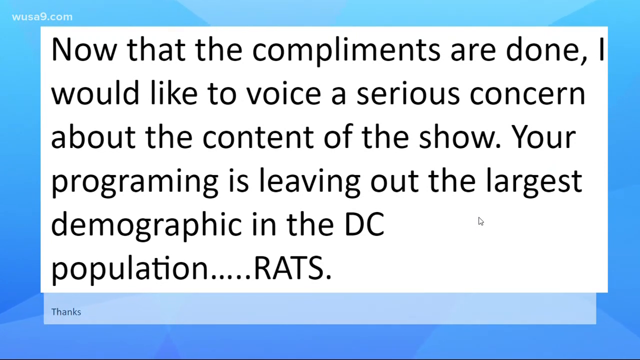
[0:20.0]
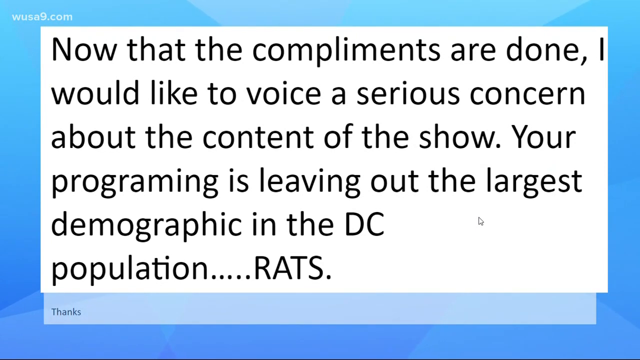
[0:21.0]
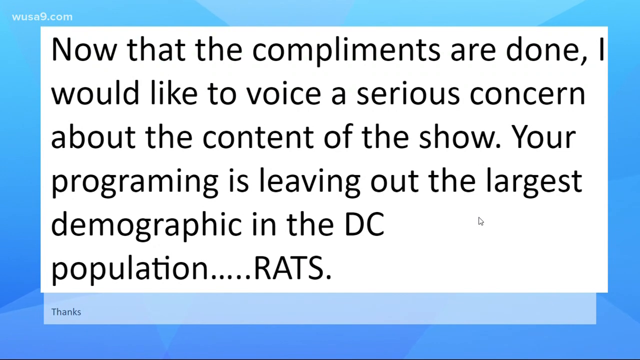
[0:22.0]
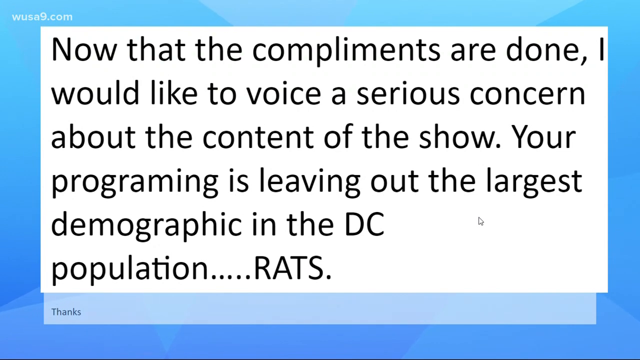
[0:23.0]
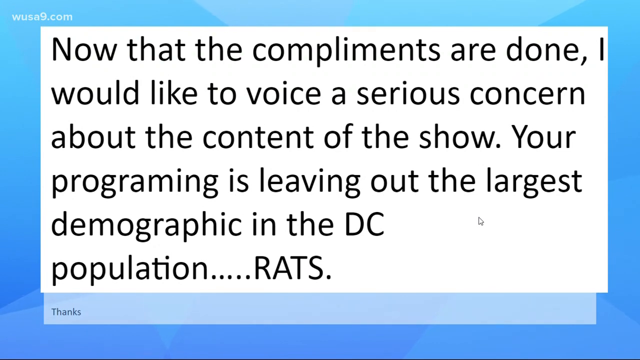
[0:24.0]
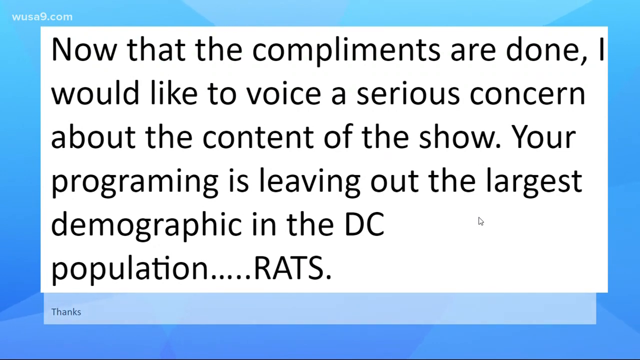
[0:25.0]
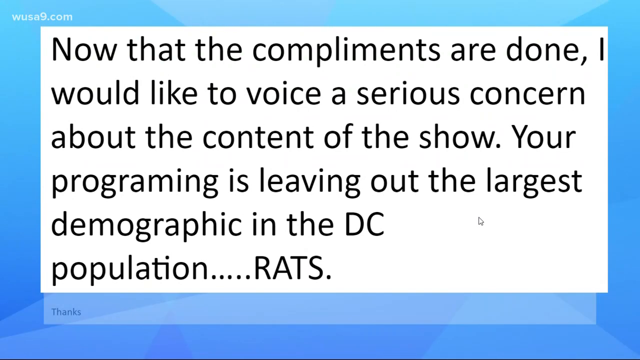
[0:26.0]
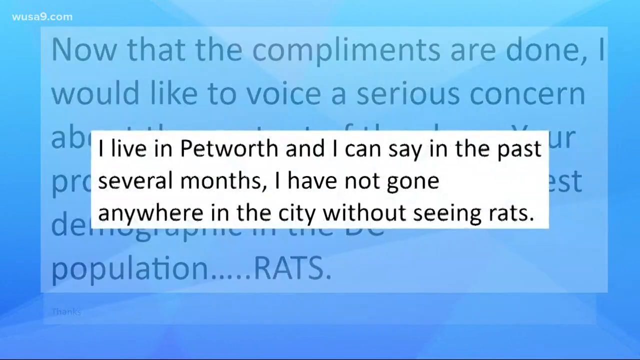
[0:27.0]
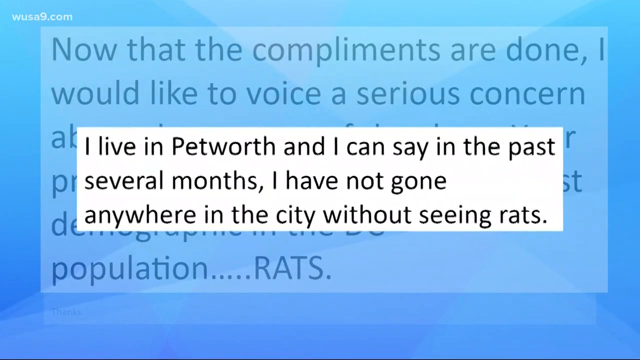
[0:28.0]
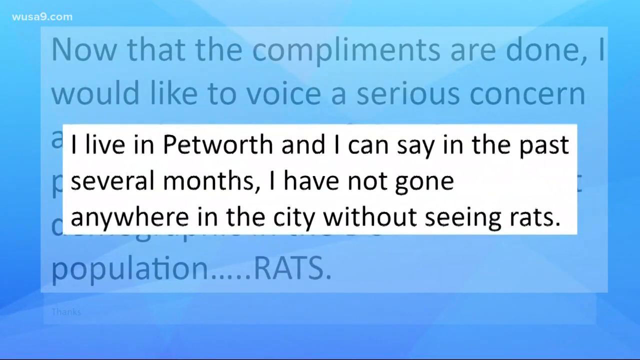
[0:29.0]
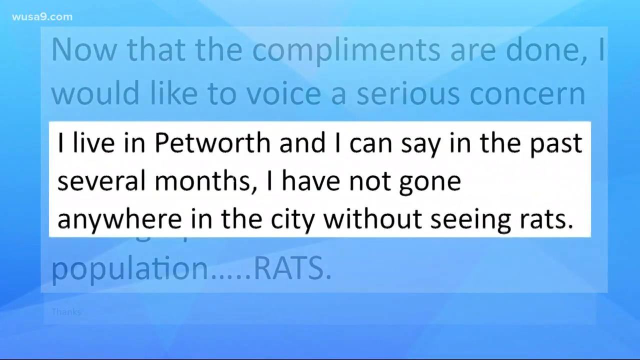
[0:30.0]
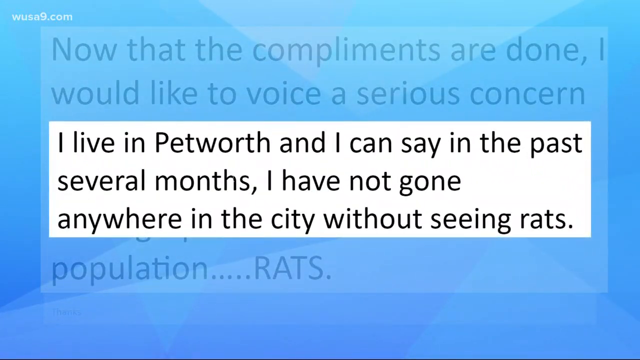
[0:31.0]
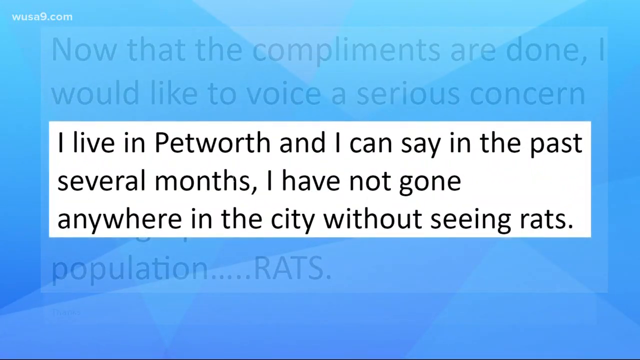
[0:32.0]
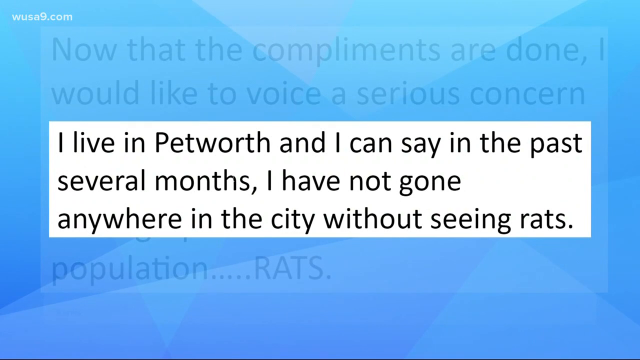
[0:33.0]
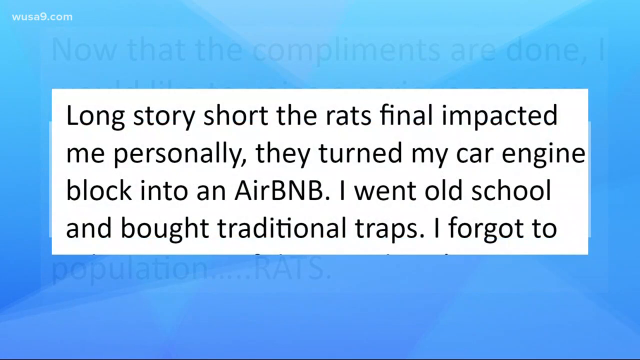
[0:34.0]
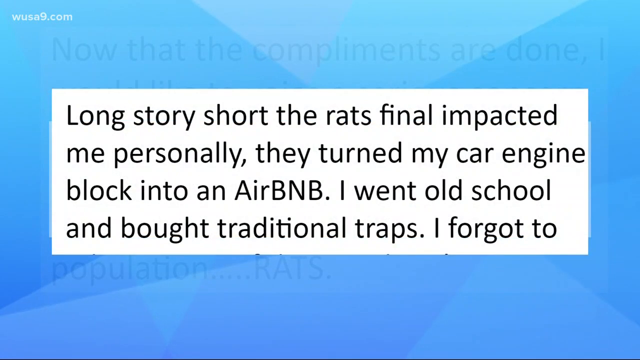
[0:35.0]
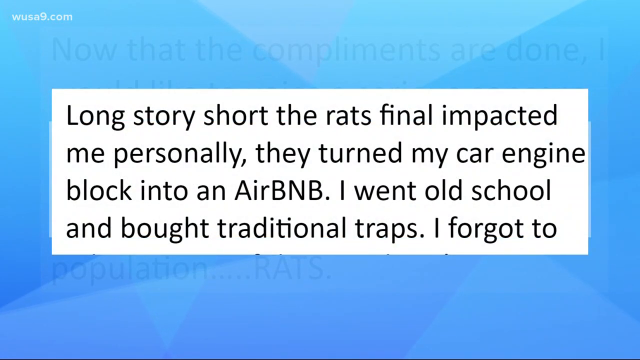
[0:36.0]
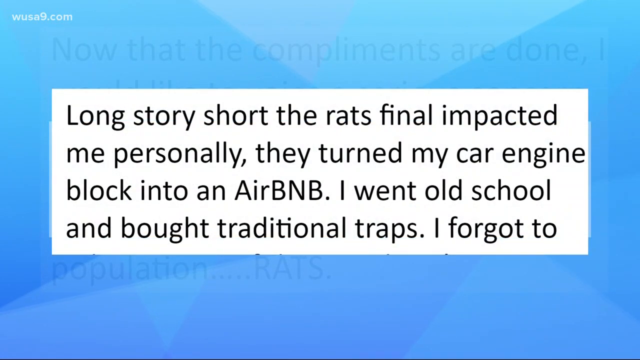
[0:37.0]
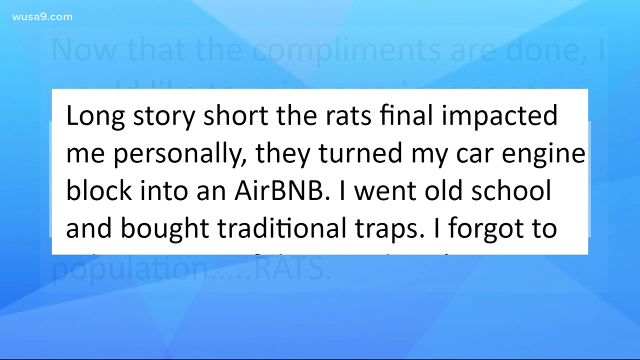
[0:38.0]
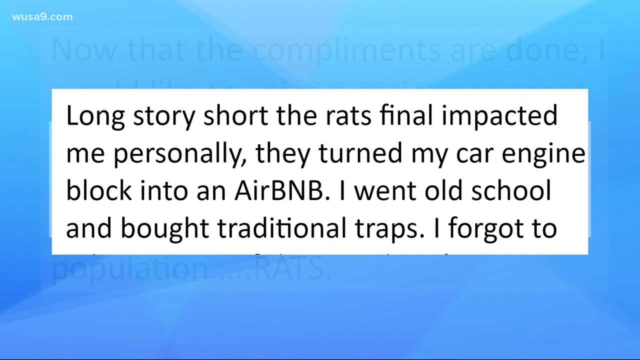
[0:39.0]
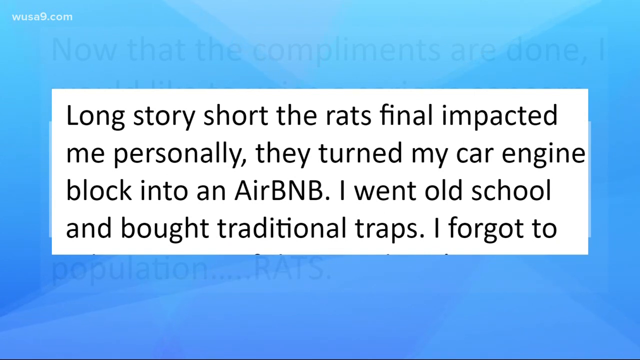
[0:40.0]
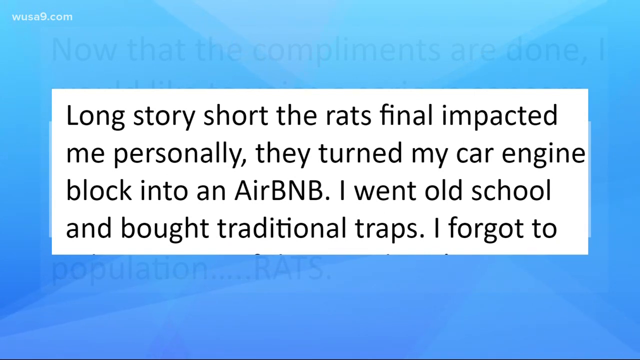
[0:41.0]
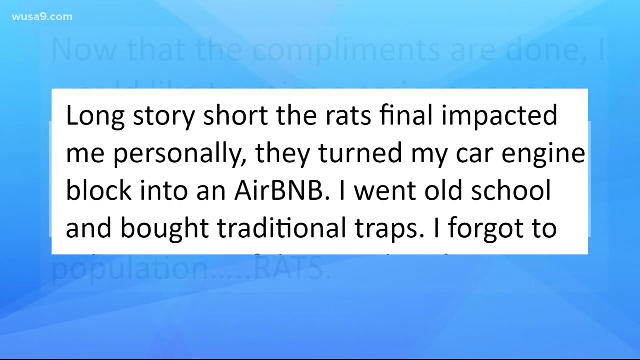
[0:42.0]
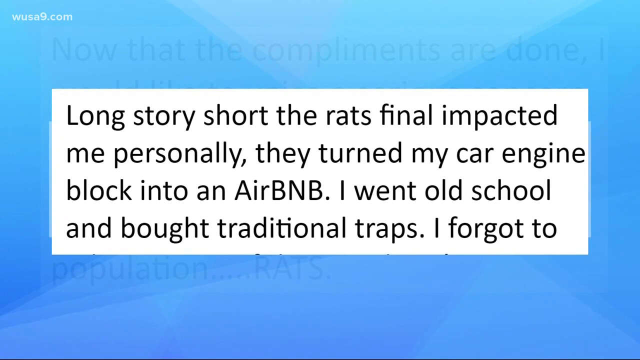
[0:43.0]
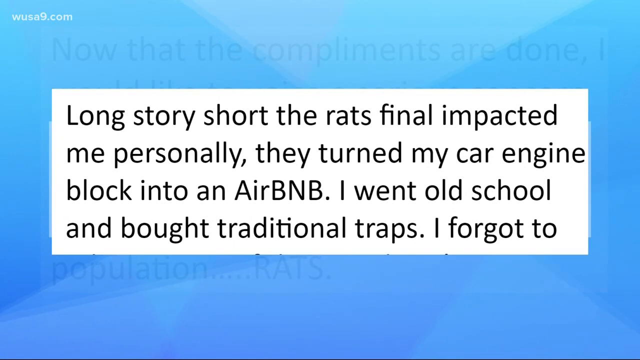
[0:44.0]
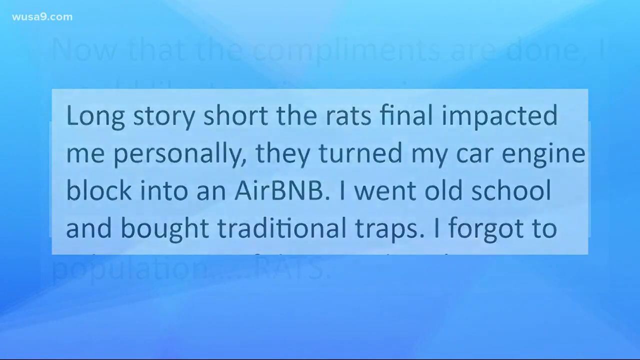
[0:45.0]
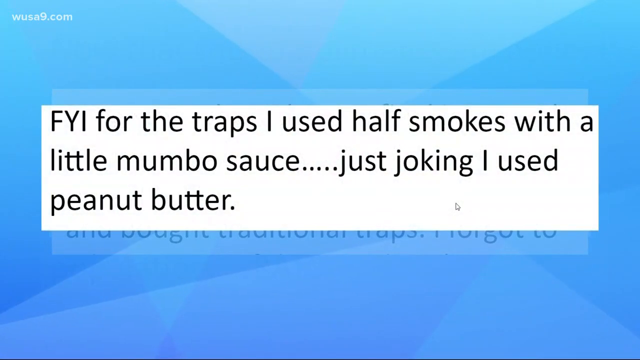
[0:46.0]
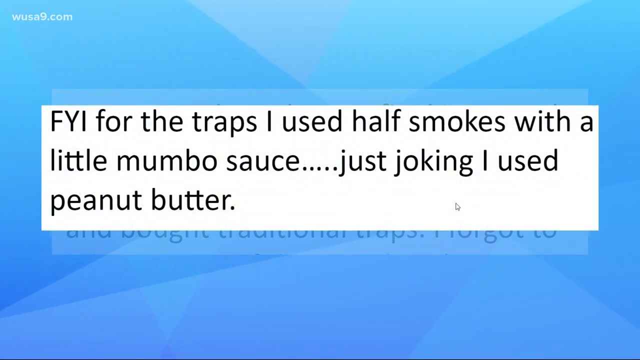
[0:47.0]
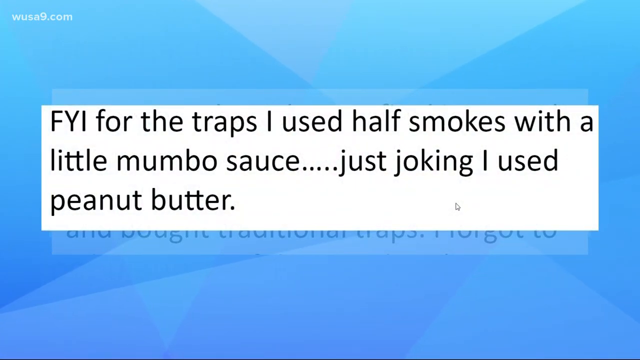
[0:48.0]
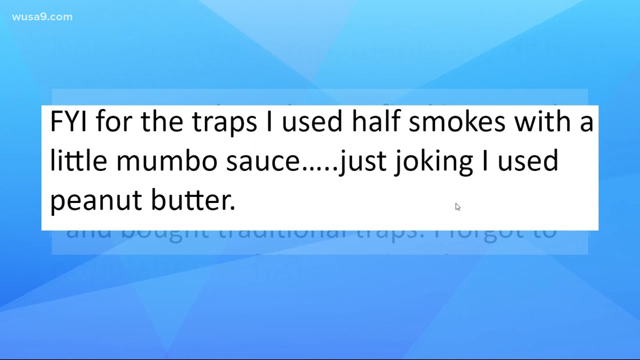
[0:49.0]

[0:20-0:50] A document appears on a blue background, reading: 'now that the compliments are done, I'd like to voice a serious concern about the content of the show. Your programming is leaving out the largest demographic in the DC population. Rats.' Another section of the document then appears in front of it, sending the first into the background. The new section reads: 'I live in Petworth and I can say in the past several months I have not gone anywhere in the city without seeing rats. Long story short, the rats finally impacted me personally. They turned my car engine block into an Airbnb. I went old school and bought traditional traps. I forgot to...' The text is cut short, and another section replaces it, reading: 'FYI for the traps I used half smokes with a little Mumbo sauce... Just joking I used peanut butter'.